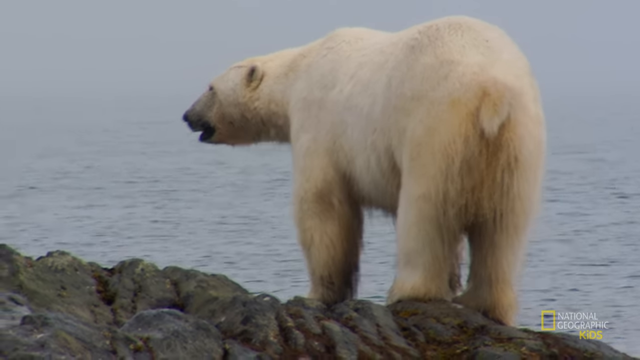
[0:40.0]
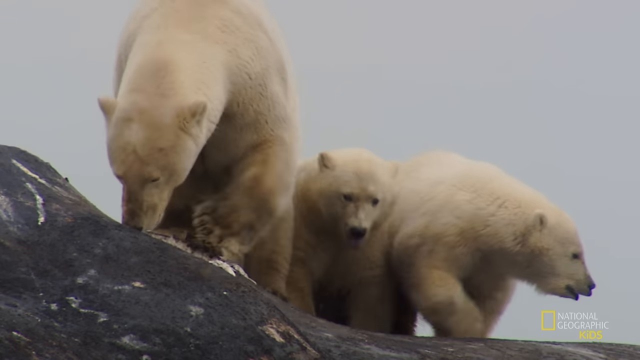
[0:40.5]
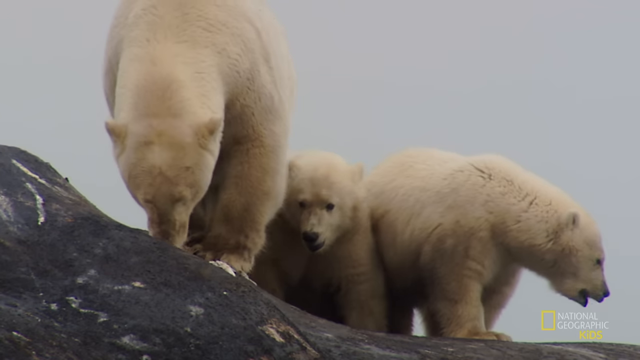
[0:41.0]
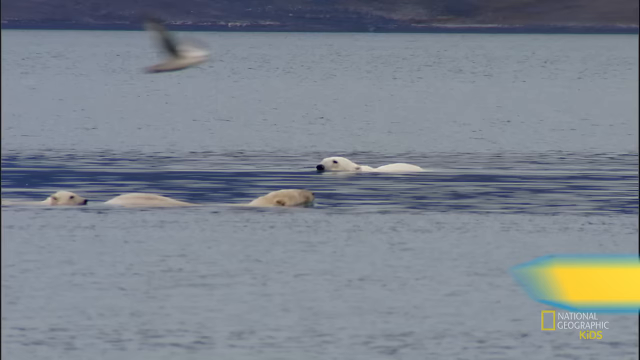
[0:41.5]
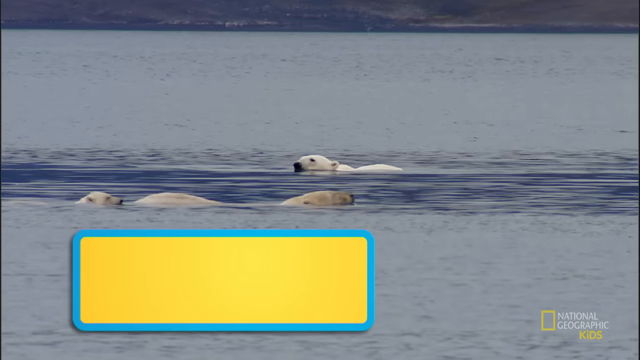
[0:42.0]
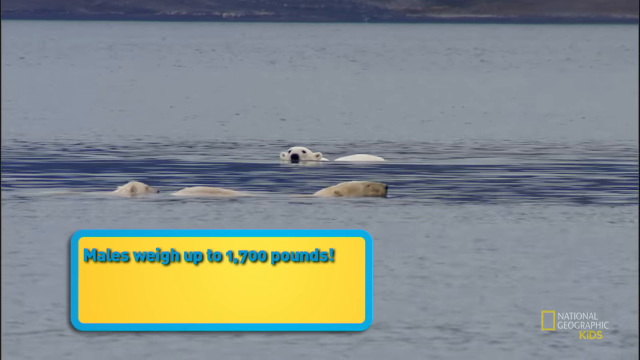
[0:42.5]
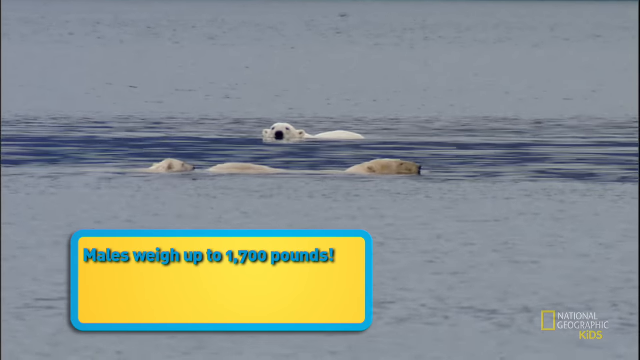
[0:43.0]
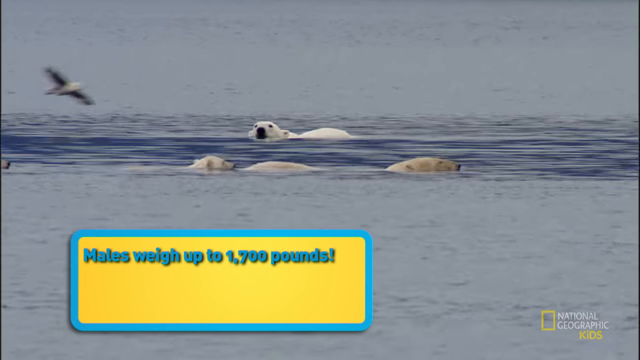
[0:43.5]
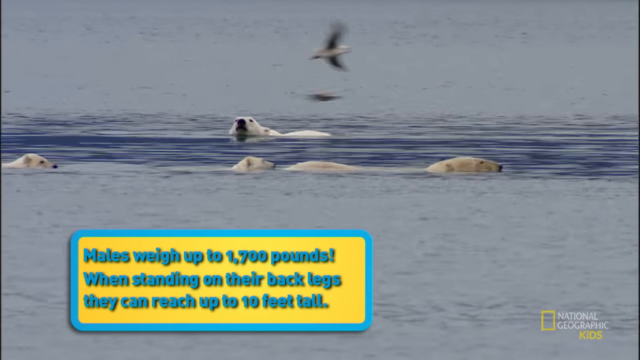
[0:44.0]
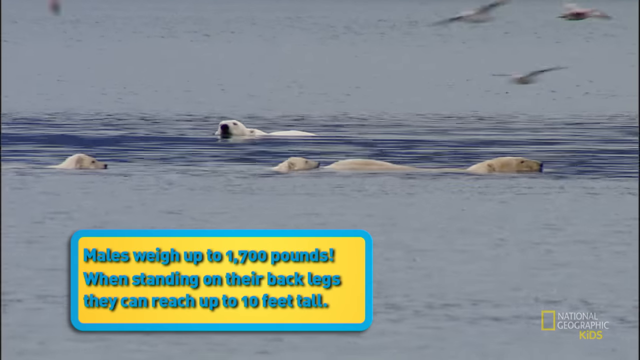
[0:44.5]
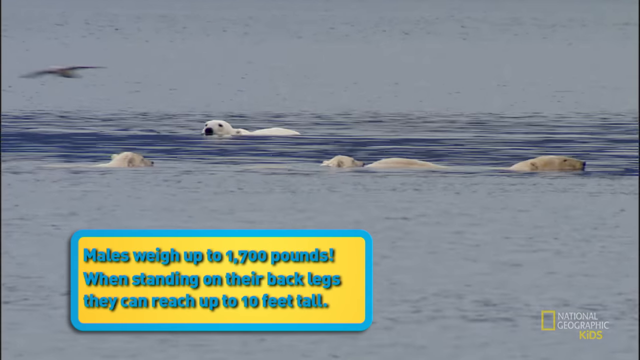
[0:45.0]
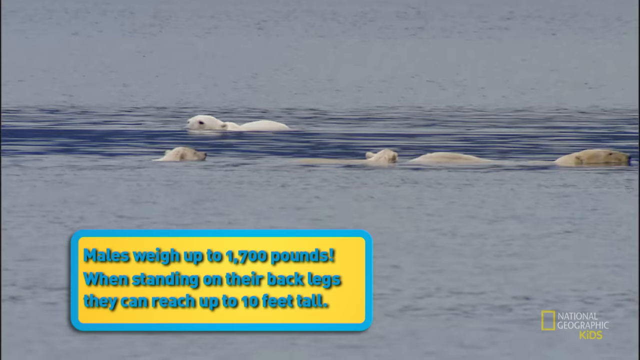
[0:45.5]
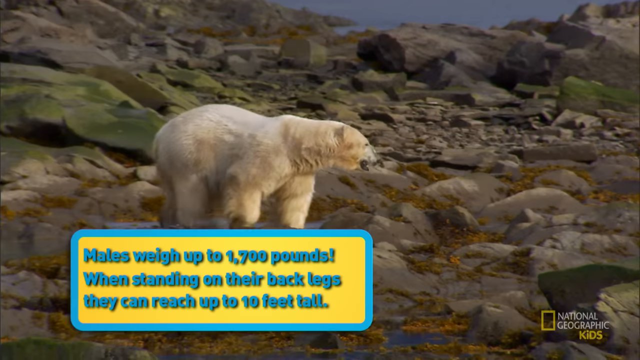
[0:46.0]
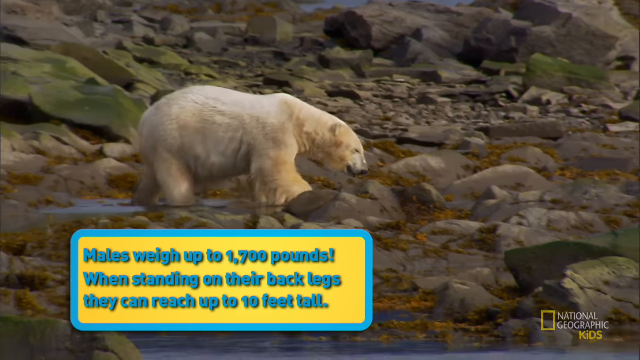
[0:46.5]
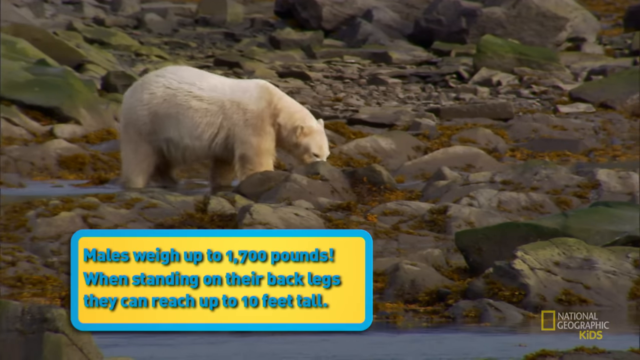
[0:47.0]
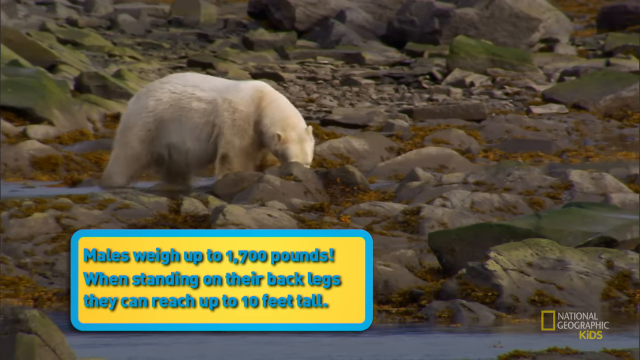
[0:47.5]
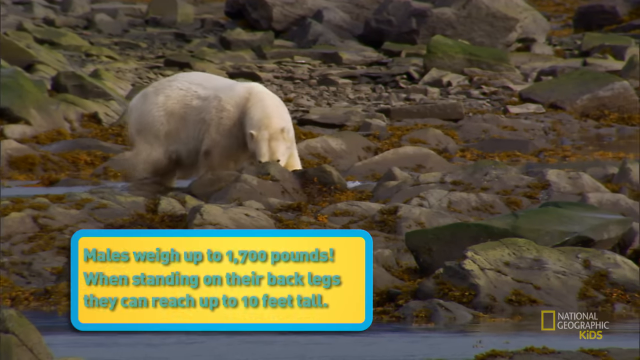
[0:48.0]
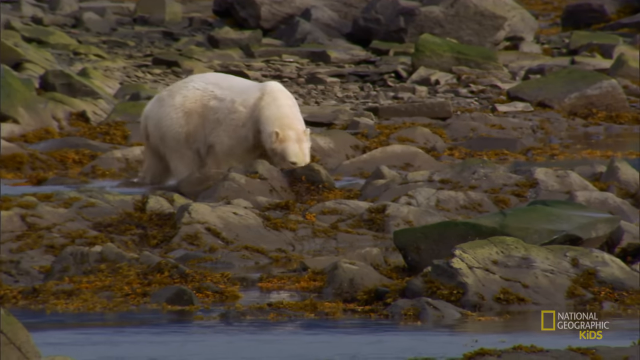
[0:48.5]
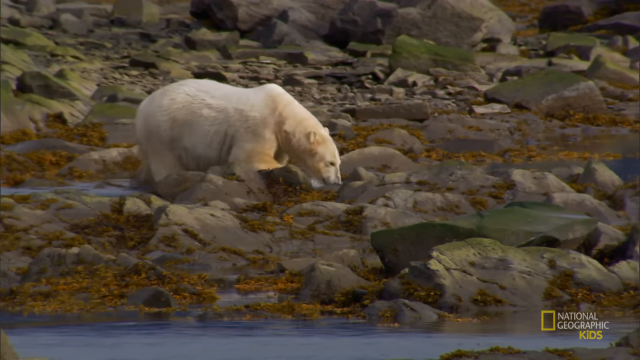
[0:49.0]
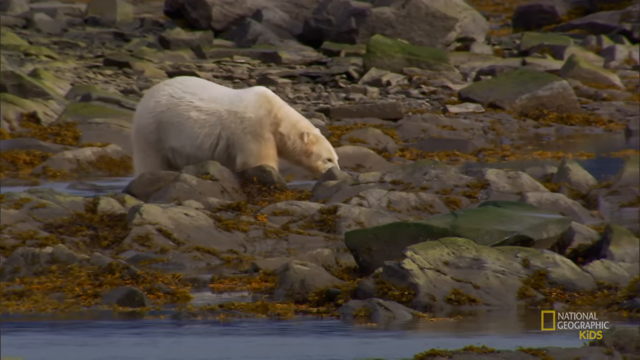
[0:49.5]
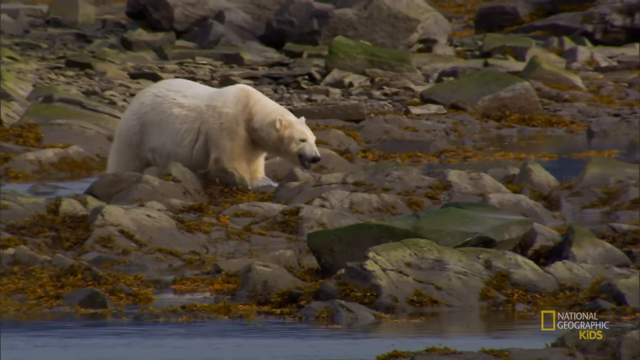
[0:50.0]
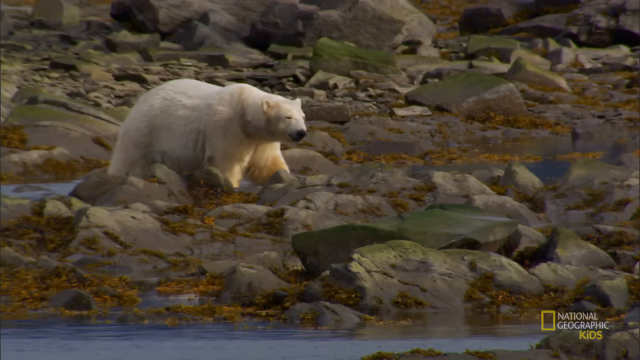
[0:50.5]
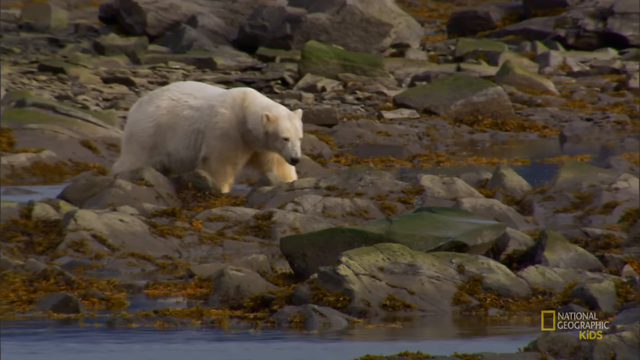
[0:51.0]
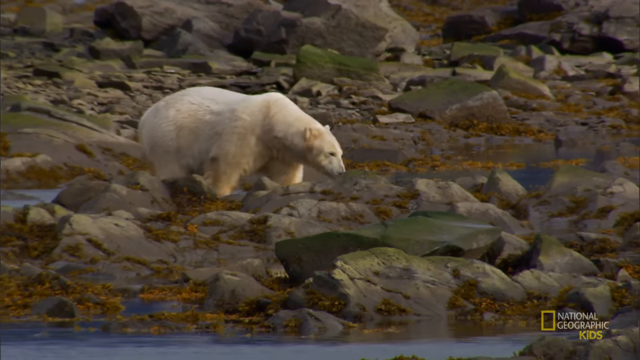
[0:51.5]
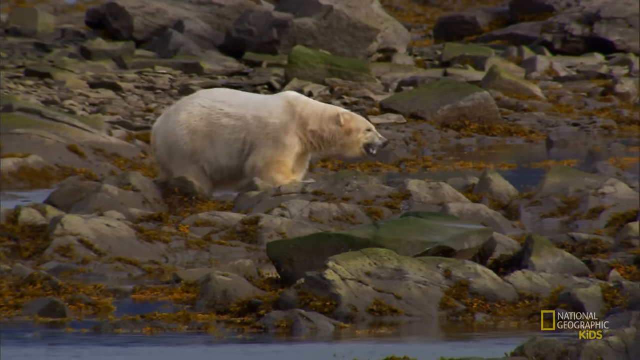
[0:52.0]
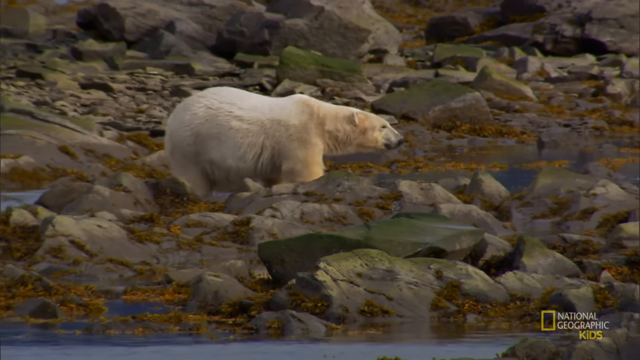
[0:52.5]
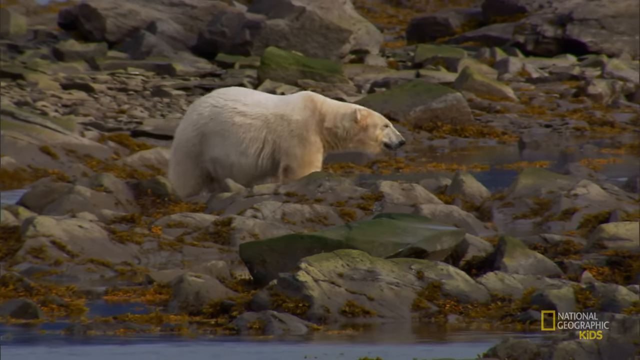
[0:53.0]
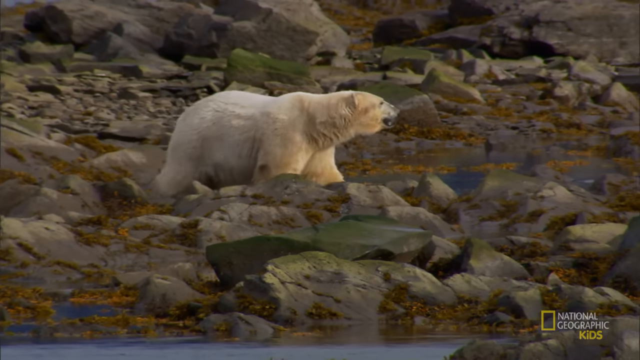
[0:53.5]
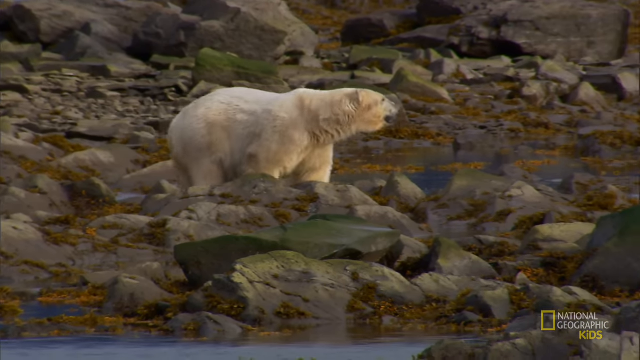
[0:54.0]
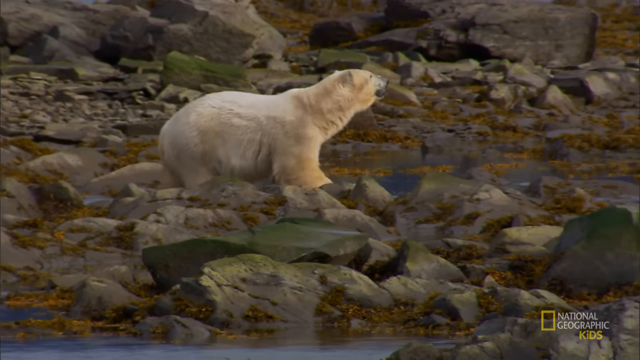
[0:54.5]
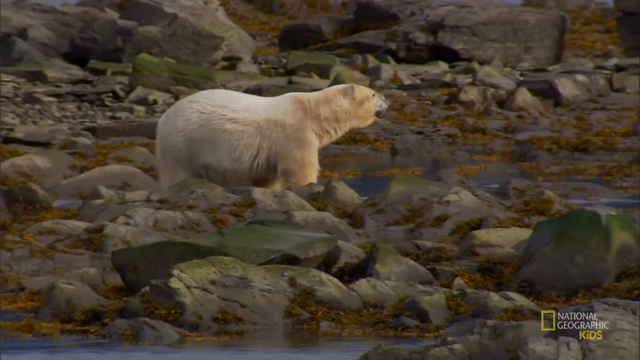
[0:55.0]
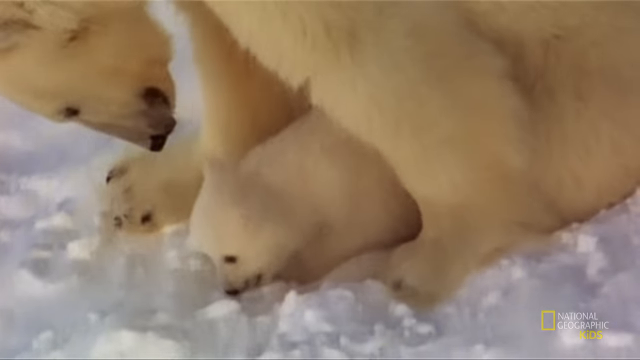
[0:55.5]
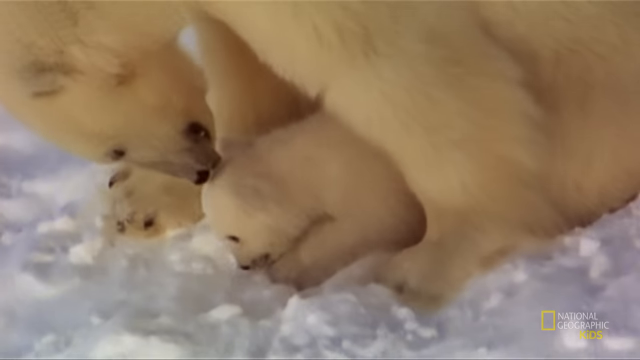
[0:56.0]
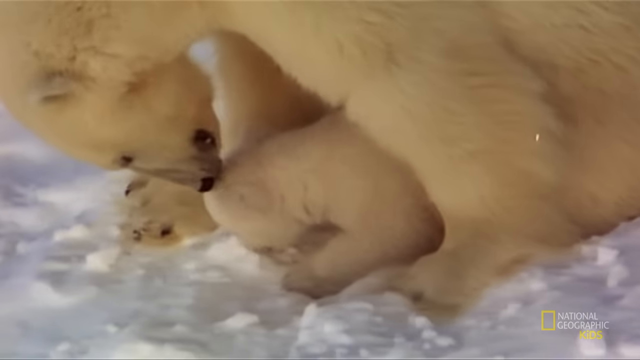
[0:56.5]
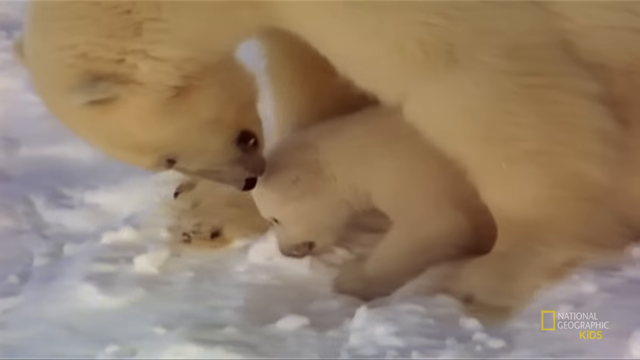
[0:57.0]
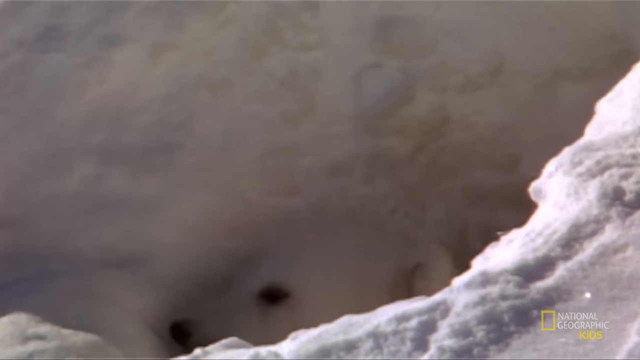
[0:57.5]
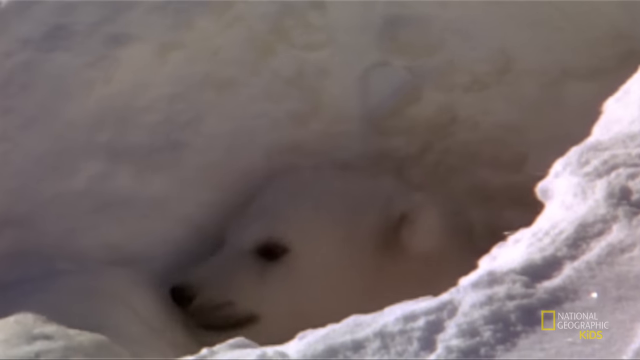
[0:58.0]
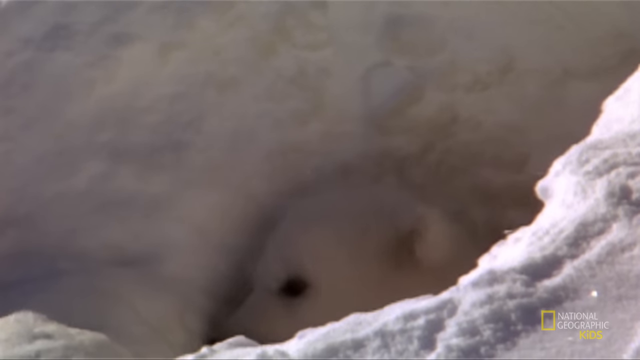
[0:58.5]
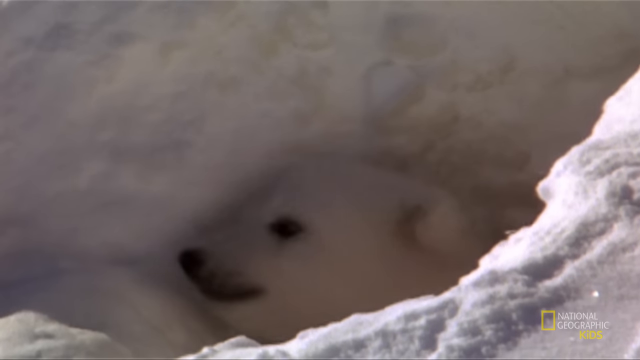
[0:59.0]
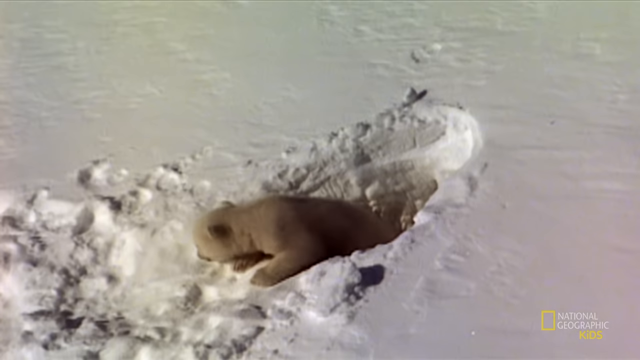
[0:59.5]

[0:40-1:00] Polar bears on the land walk back and forth, then polar bears swim. A pop-up reads "mates weigh up to 1700 pounds when standing on their back legs they can reach up to 90 feet tall." A polar bear walks very carefully through rocks, all by itself, and looks up. A polar bear with two babies stands on snow; the very tiny babies are coming out of a little hole in the snowy ground. Polar bears swim again with seagulls flying over their heads. The water has a flowing movement, and there is water in between the rocks where the polar bears walk.